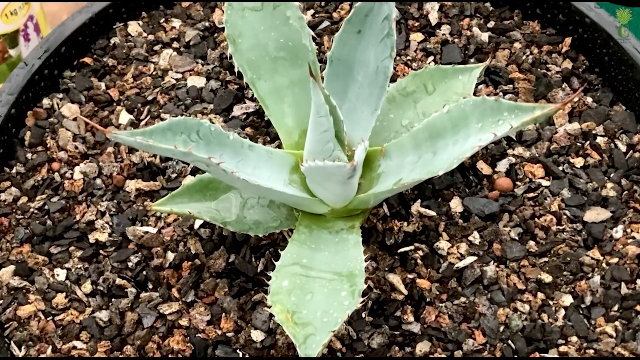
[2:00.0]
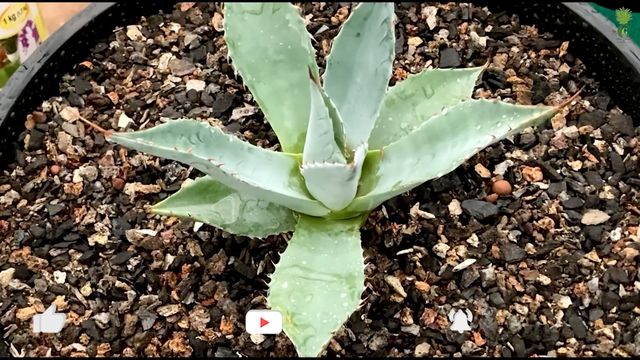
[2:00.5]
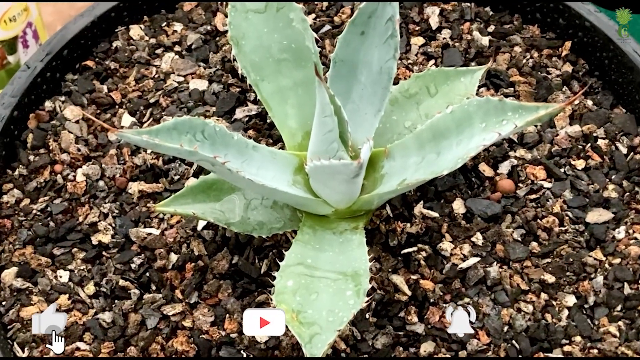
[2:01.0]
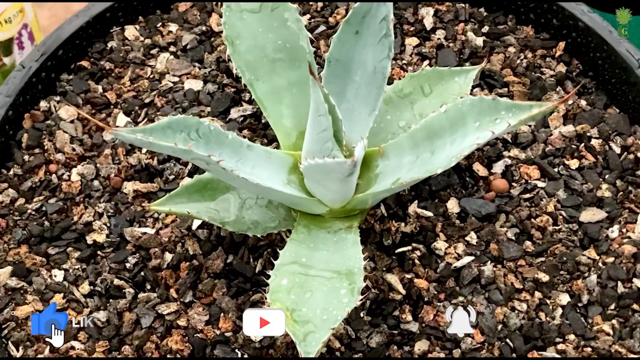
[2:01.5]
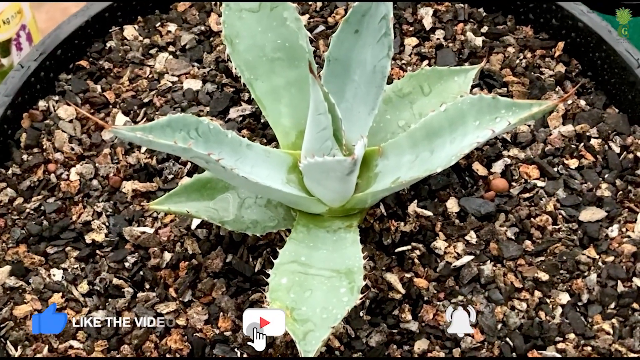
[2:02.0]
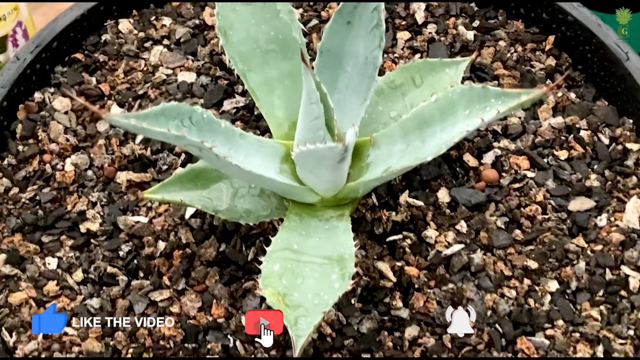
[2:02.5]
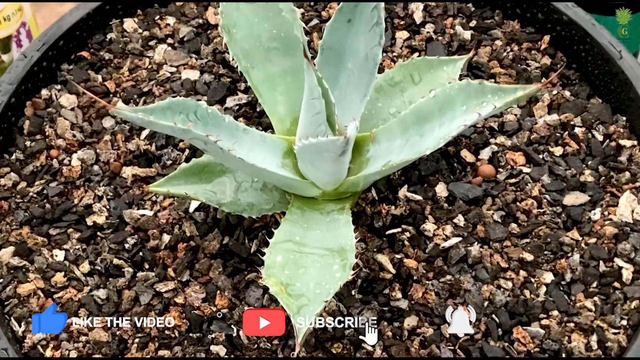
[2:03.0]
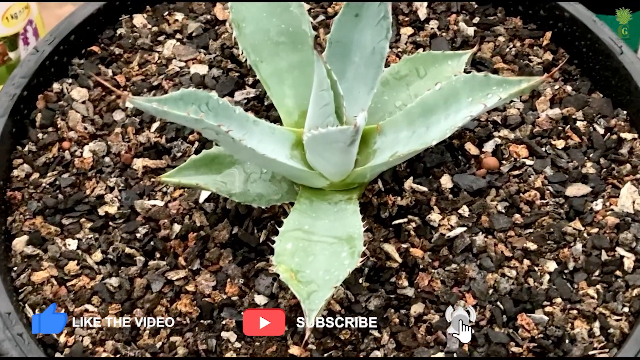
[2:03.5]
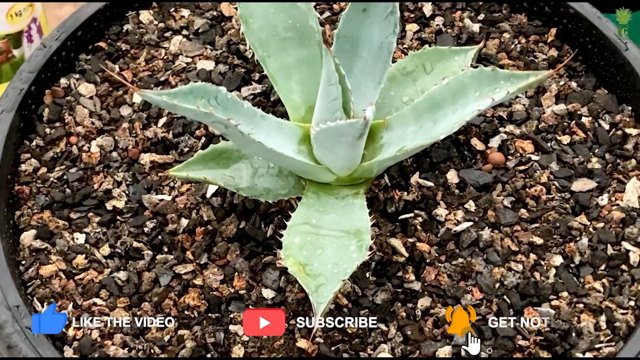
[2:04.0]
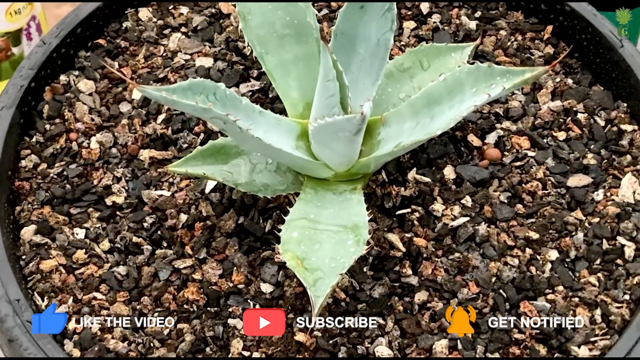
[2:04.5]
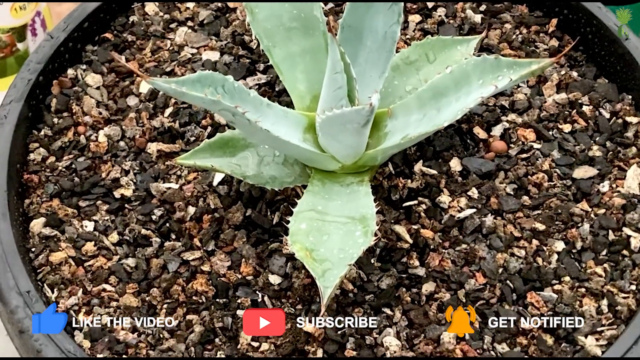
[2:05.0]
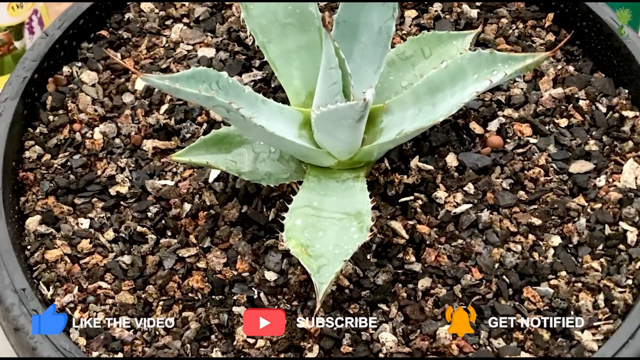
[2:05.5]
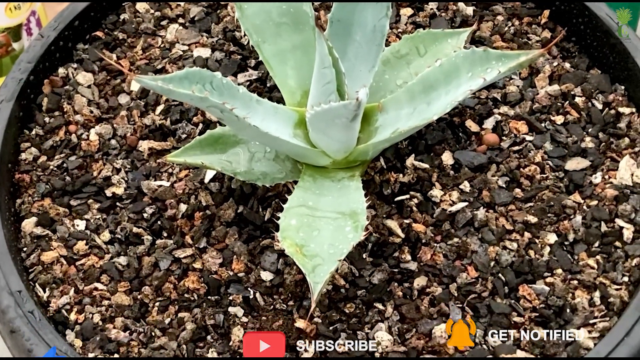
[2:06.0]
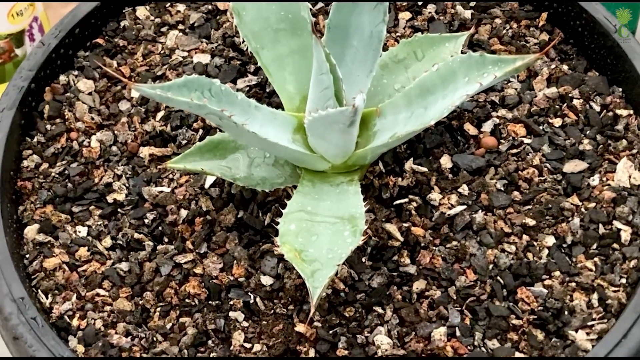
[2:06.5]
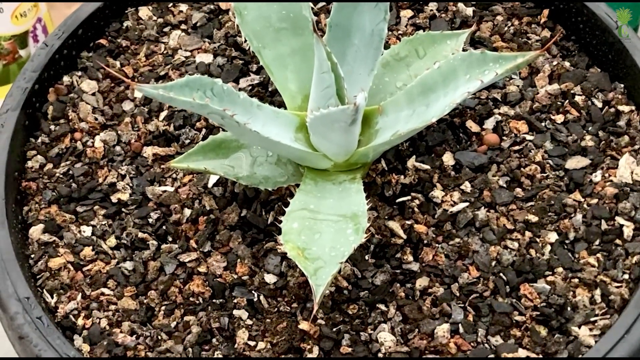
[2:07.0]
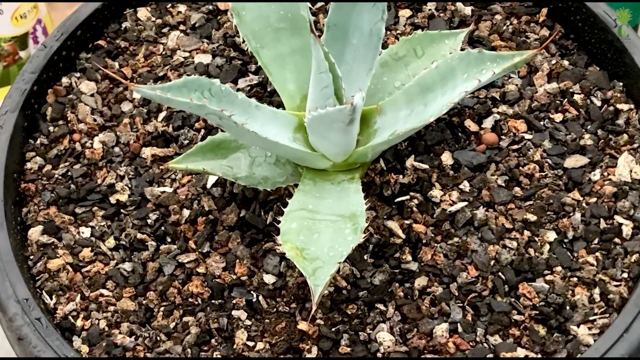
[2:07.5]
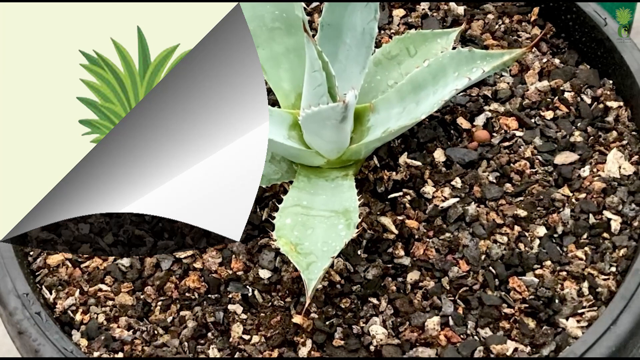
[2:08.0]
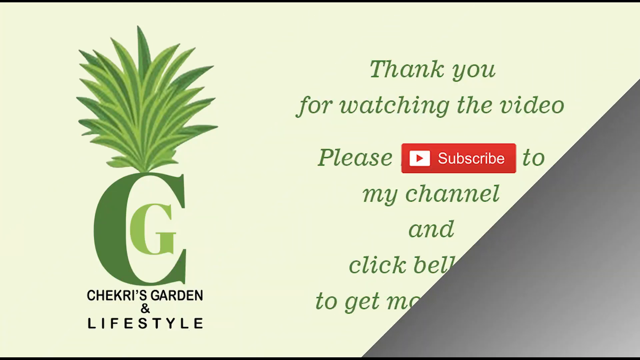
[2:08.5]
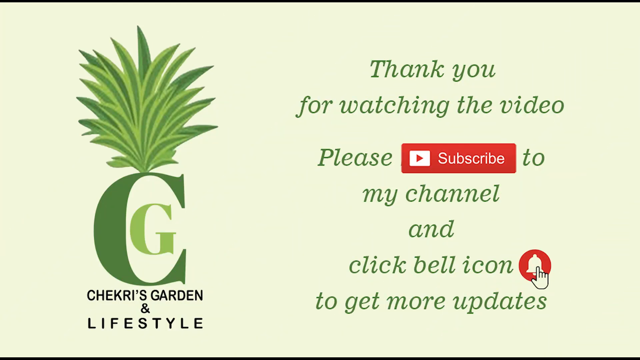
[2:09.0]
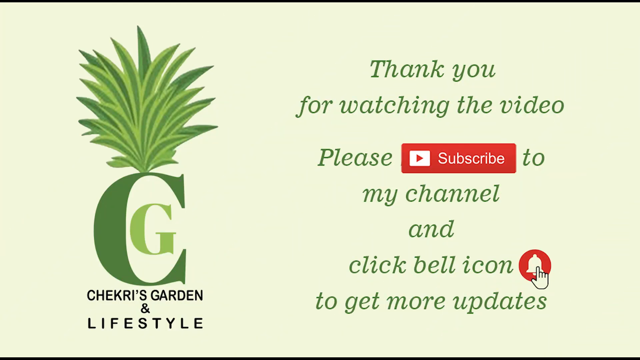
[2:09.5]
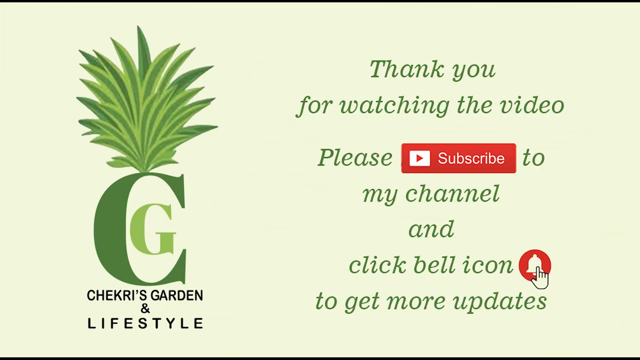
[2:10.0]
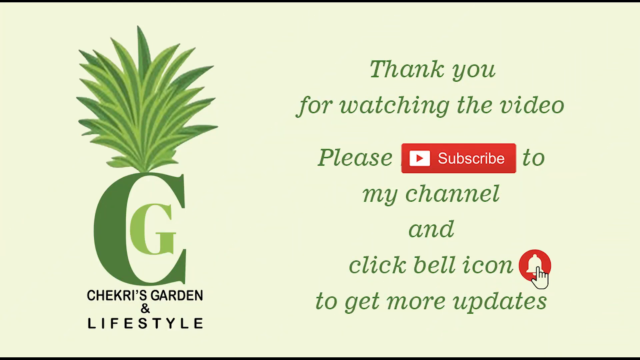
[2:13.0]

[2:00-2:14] A picture of the succulent in the pot is shown. At the bottom of the video, a hand moves across a thumbs-up like symbol, a play button and a bell: a like button, a subscribe button and a notification bell. The page then changes to a large CG logo with "chekri's plants," and on the right-hand side is information about the nursery. On the right is written "thank you for watching the video. Please subscribe to my channel and click the bell icon to get more updates."